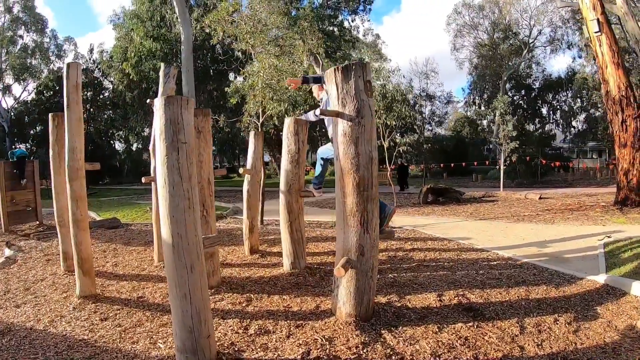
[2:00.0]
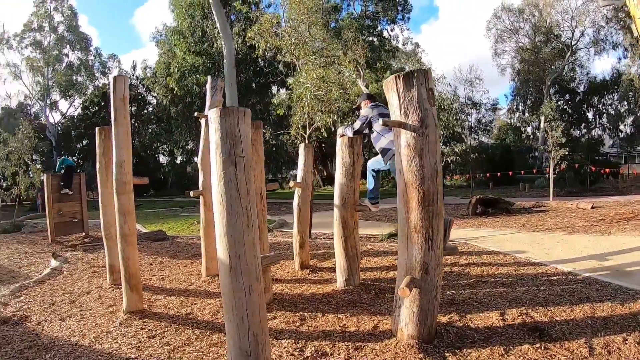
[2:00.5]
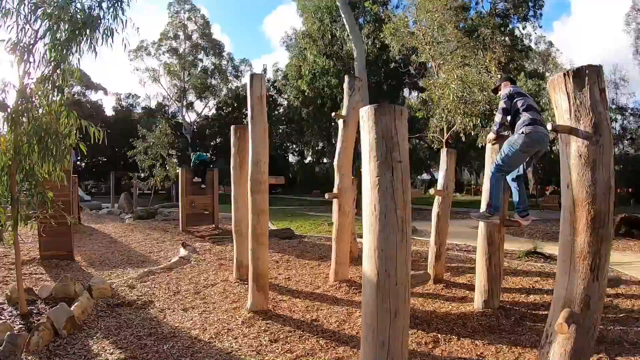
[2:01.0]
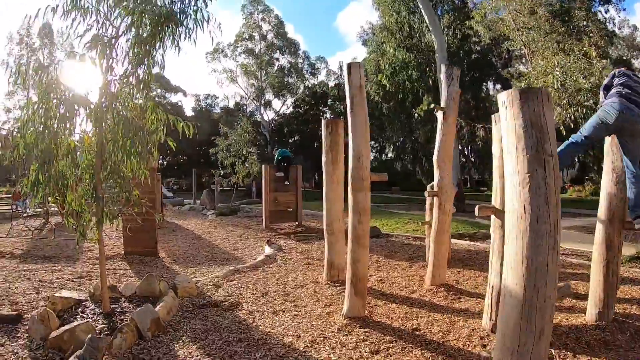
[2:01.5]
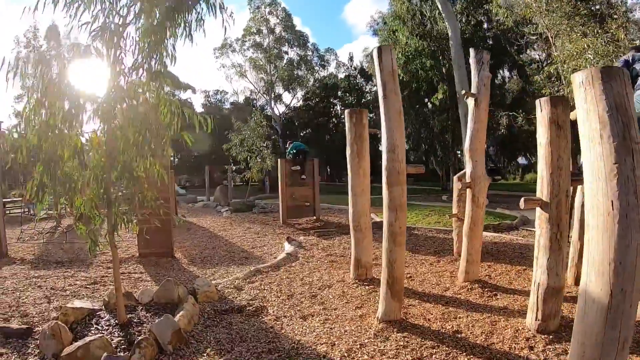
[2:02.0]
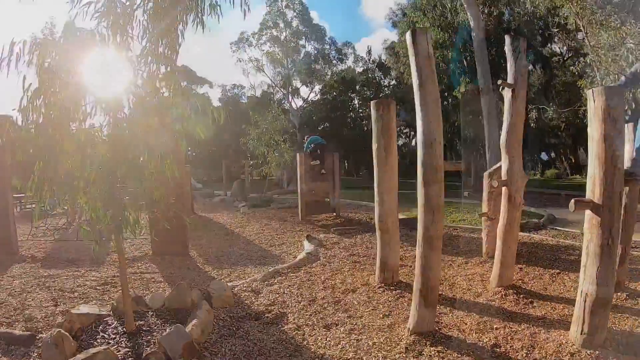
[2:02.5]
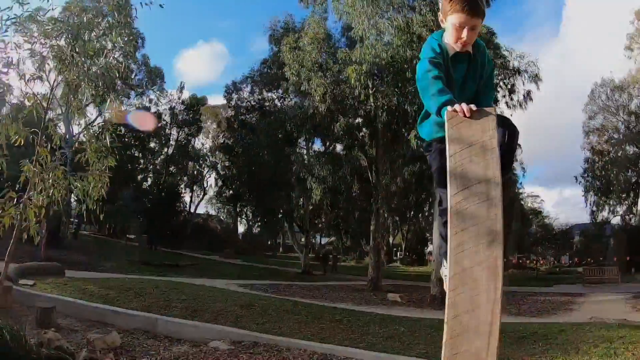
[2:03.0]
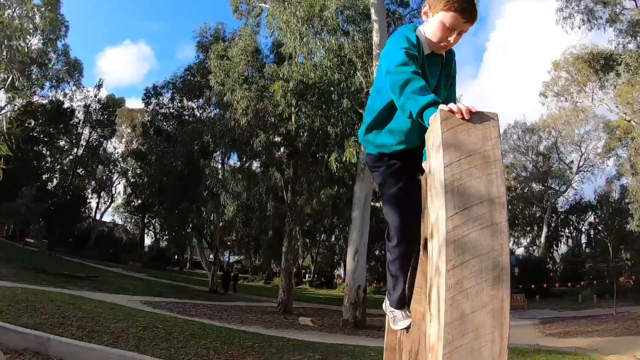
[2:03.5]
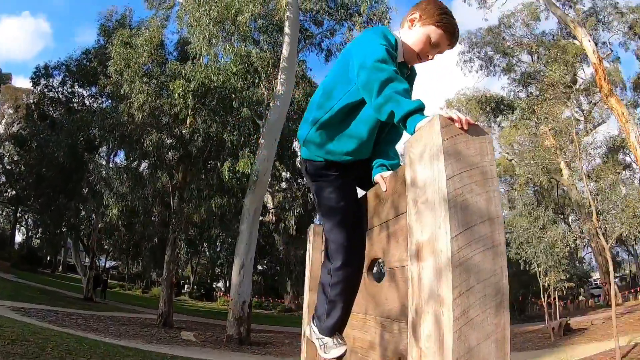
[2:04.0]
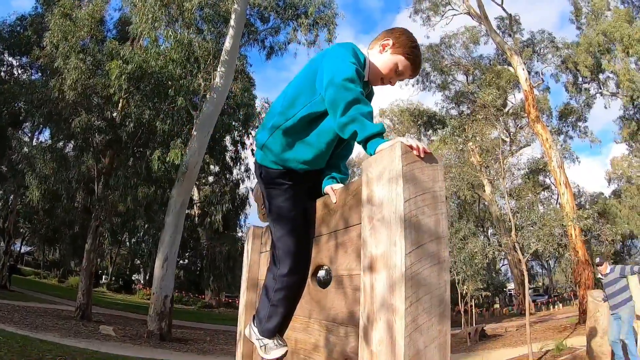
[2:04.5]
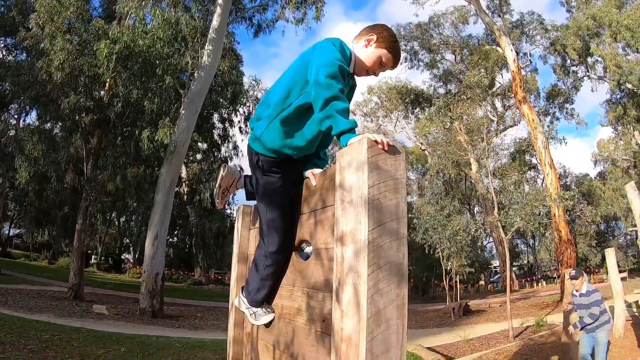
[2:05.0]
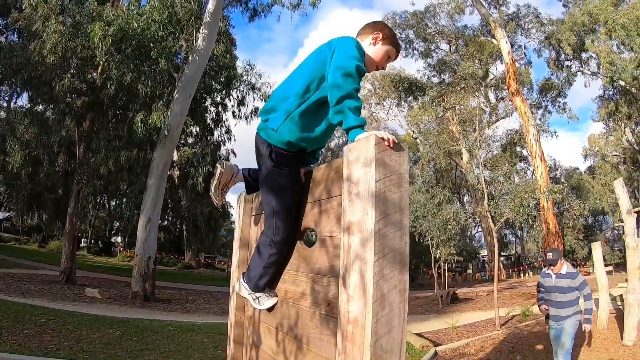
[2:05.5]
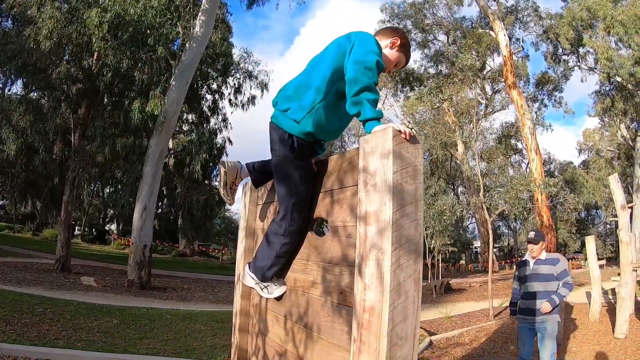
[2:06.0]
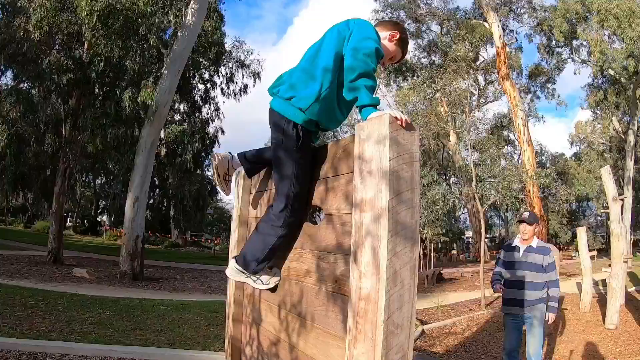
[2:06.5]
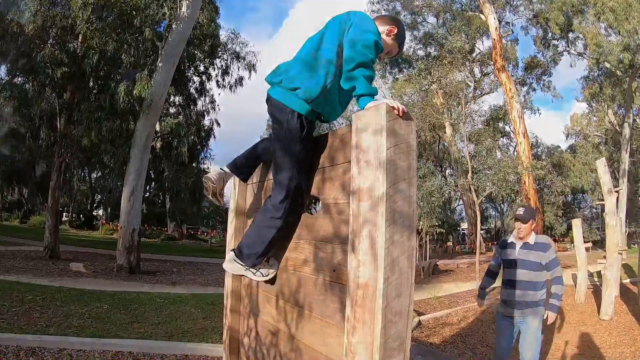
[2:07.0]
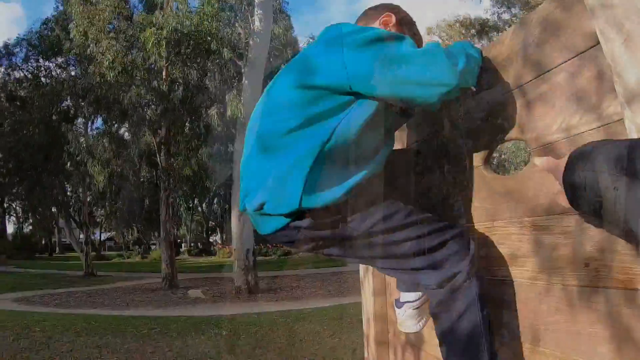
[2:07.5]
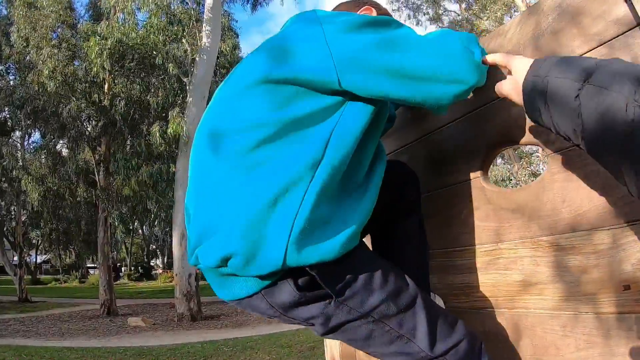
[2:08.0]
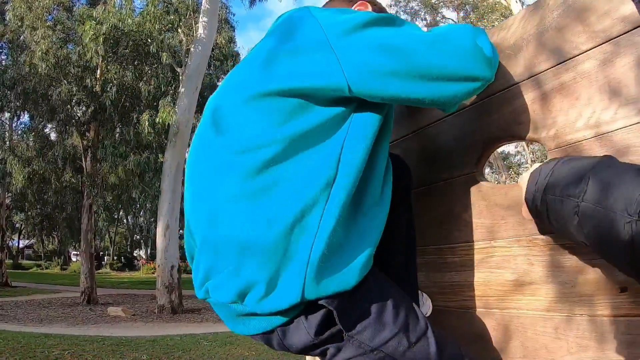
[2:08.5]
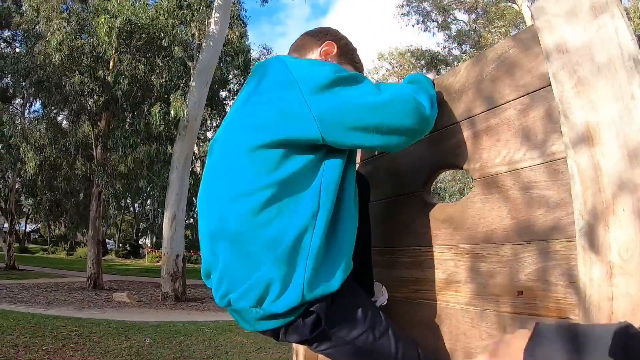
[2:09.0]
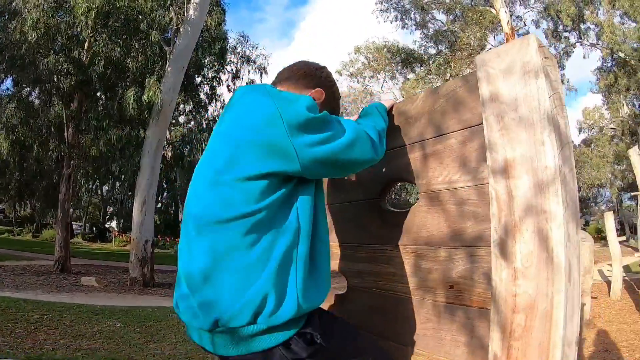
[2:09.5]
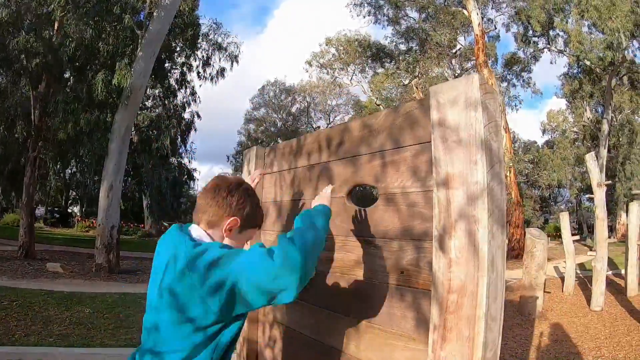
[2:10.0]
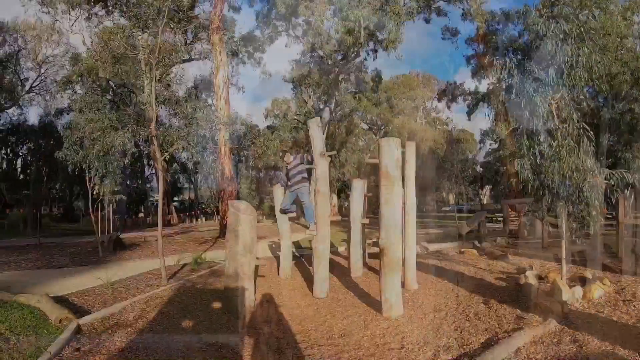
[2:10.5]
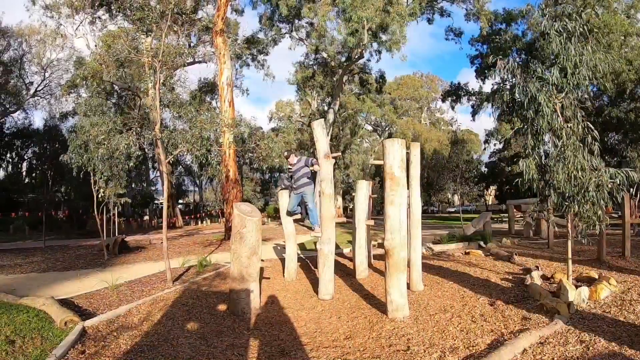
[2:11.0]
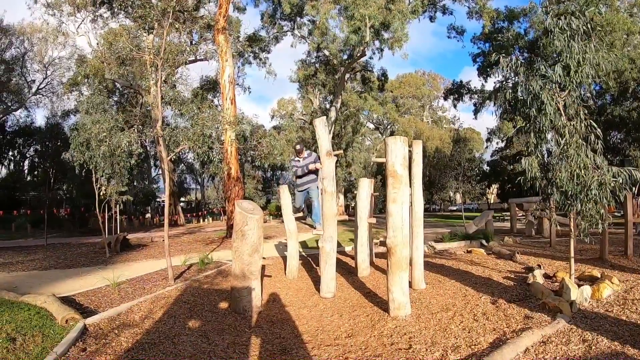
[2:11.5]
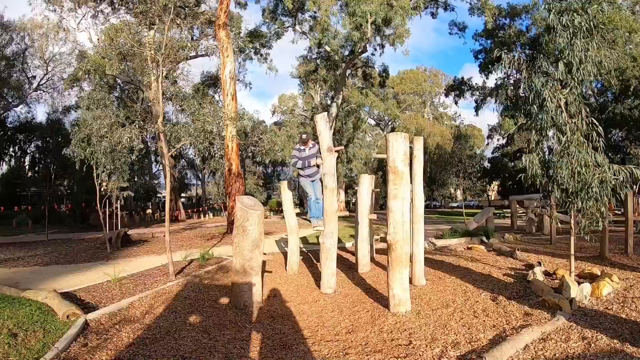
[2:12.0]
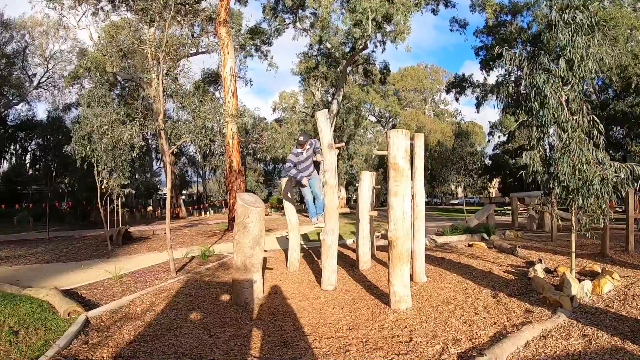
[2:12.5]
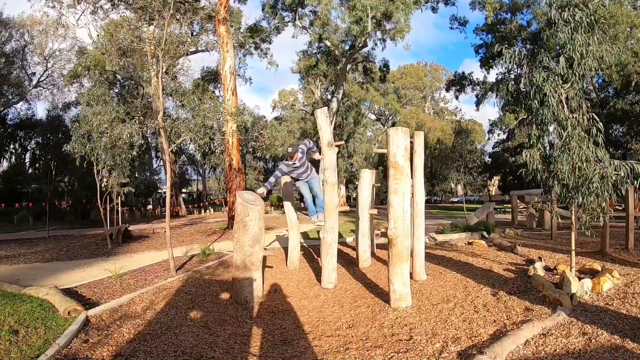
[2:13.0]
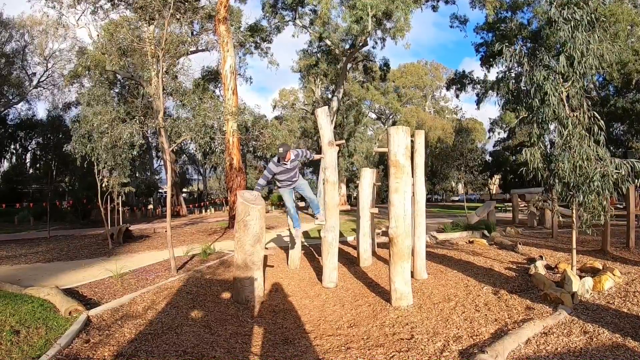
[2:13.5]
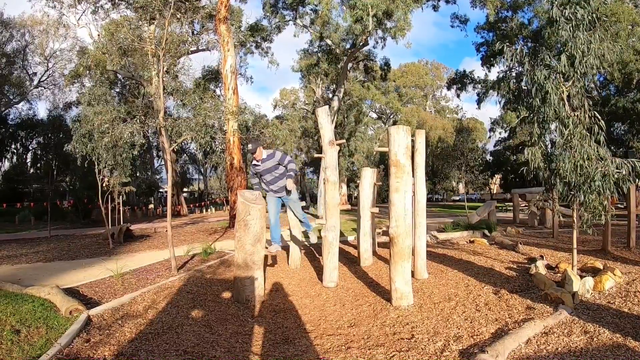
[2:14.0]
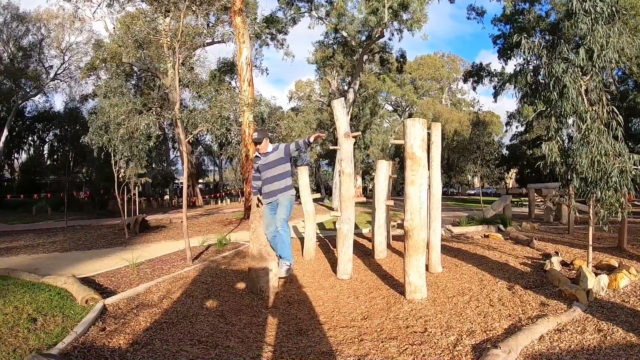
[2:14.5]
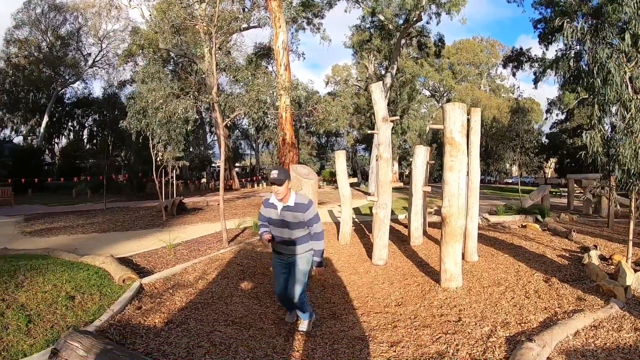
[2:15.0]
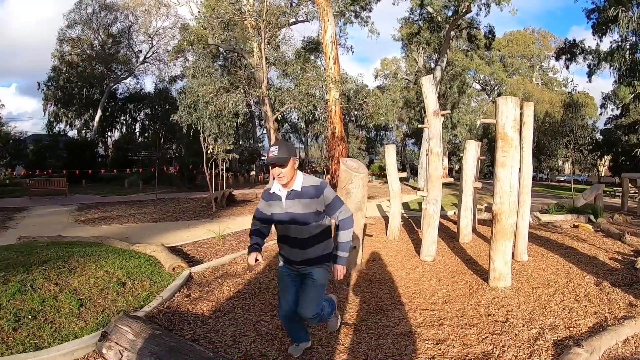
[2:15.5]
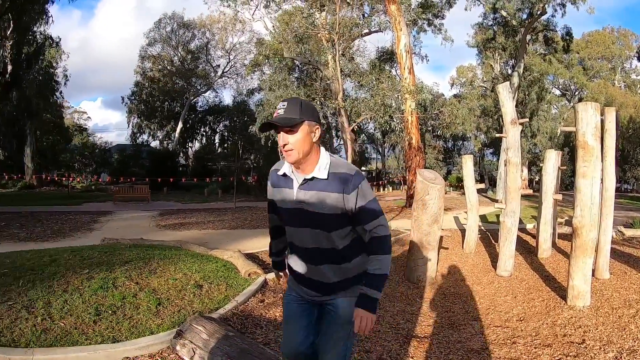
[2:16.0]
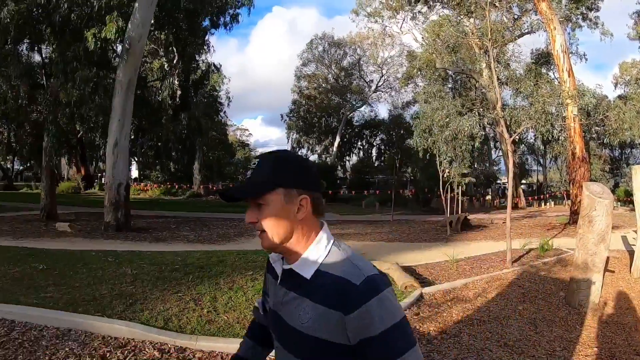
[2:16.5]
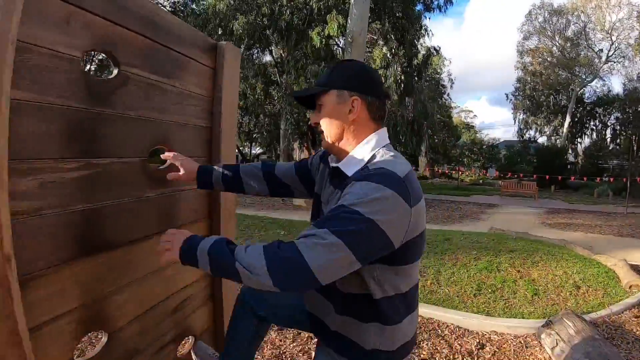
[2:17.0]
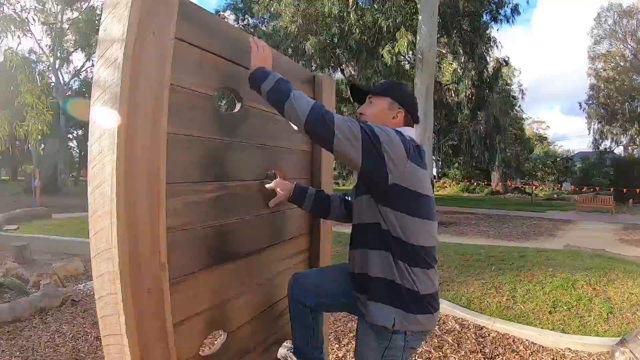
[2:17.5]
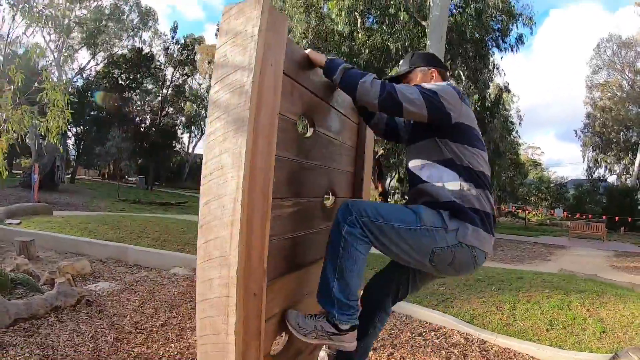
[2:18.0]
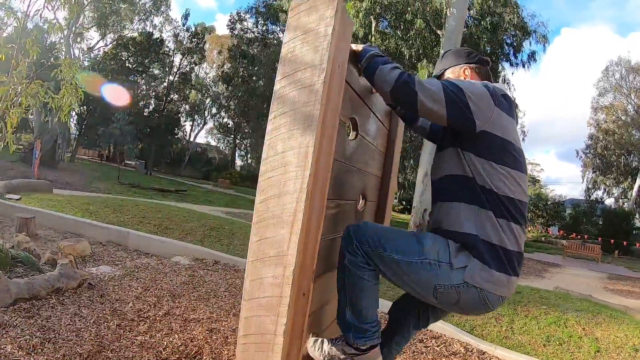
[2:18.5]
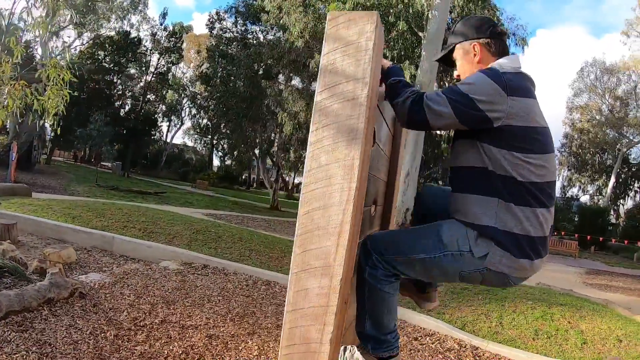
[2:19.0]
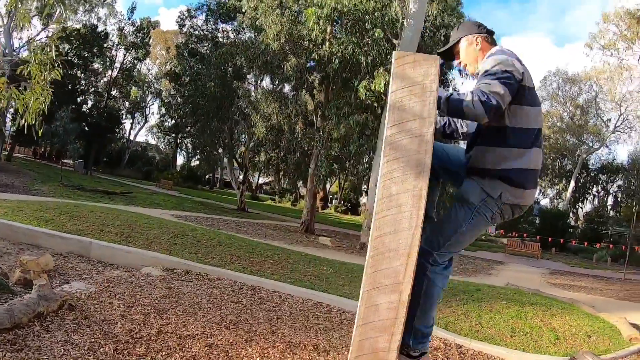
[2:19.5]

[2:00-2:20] A park has an activity area separated for kids. Many upended, stripped-bare logs seem to be planted in the ground, standing up in what looks like a circle, with larger real trees around them and a walkway to the side. The ground looks like it has been covered with sawdust for the ninja obstacle course. The sky is blue with white puffy clouds. On the course, the man in the blue polo shirt and hat and the boy navigate some of the tall wooden structures. Some look like tree trunks with handles attached; others look like wooden walls with holes carved in them for hand grips, and the man crawls up a wall using the hand grips. The man also makes his way between the upright tree trunks planted in the ground, using posts drilled into their sides as footholds and handholds, and the boy tries to do the same.